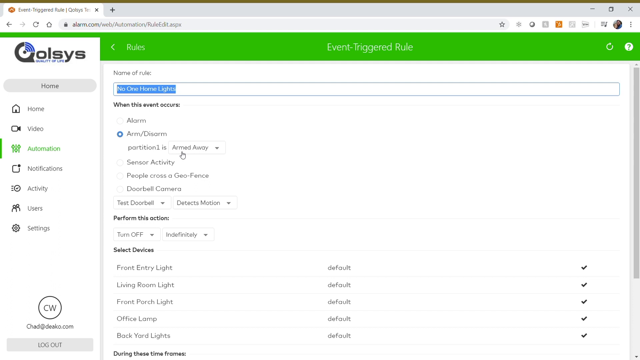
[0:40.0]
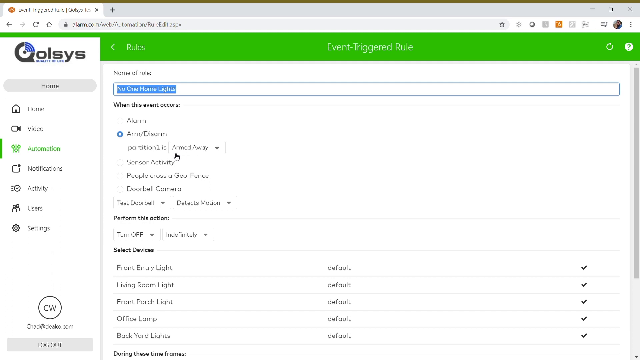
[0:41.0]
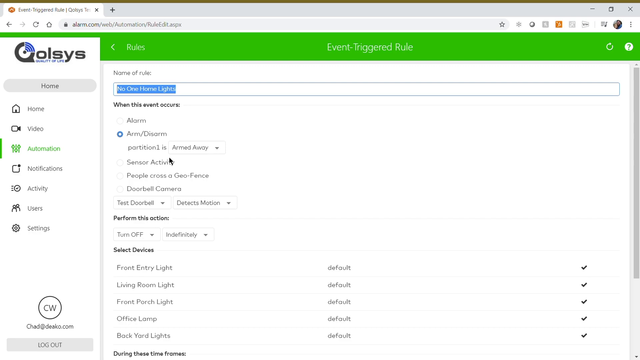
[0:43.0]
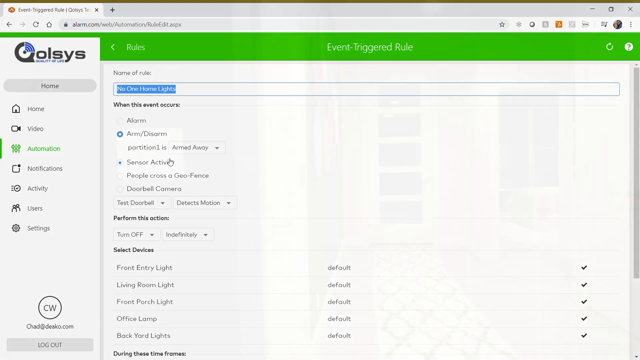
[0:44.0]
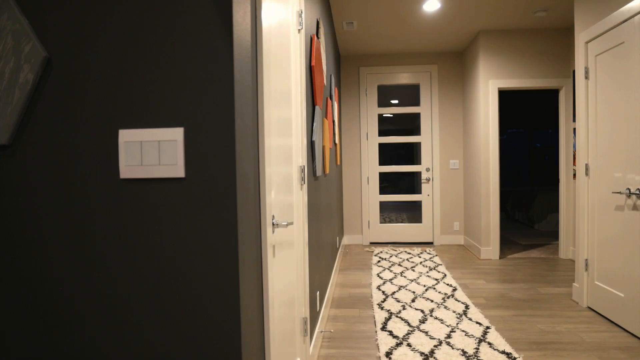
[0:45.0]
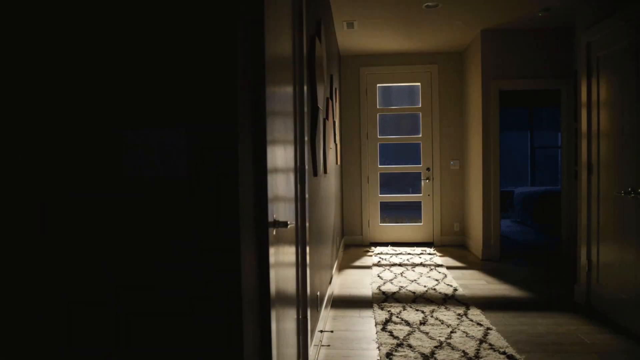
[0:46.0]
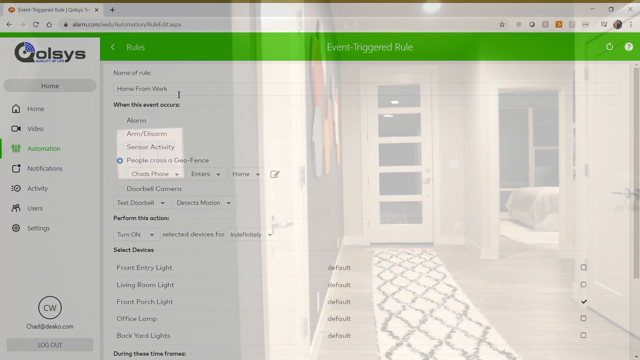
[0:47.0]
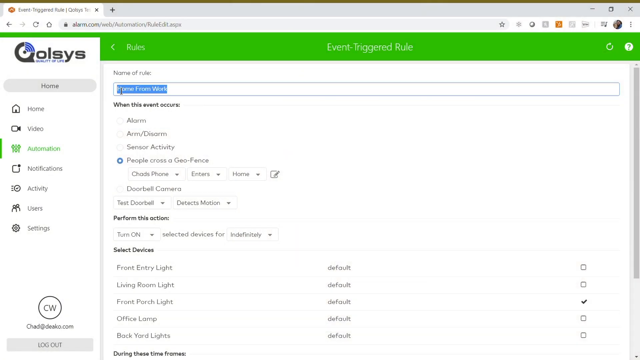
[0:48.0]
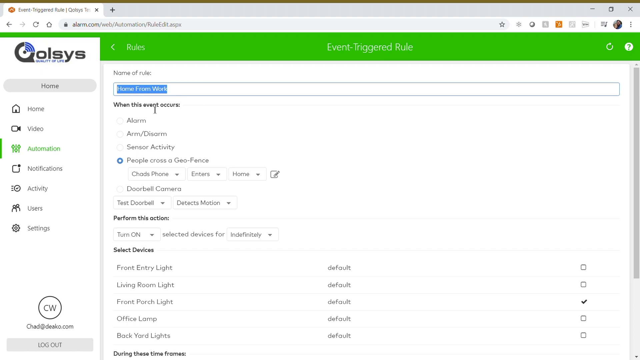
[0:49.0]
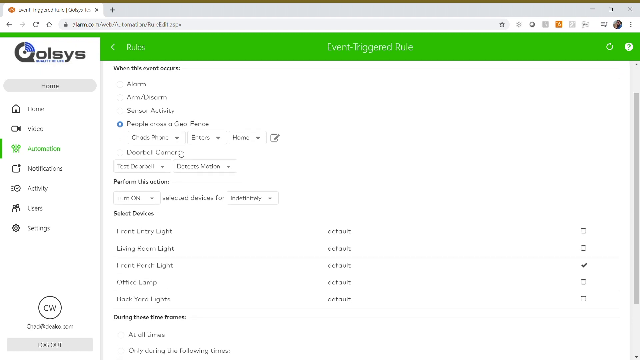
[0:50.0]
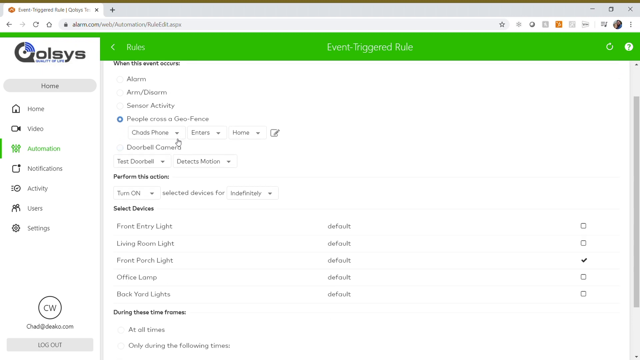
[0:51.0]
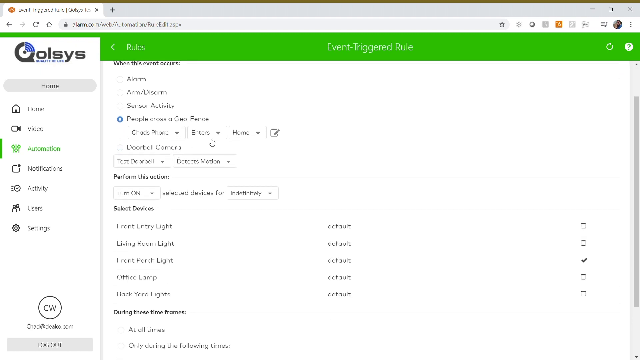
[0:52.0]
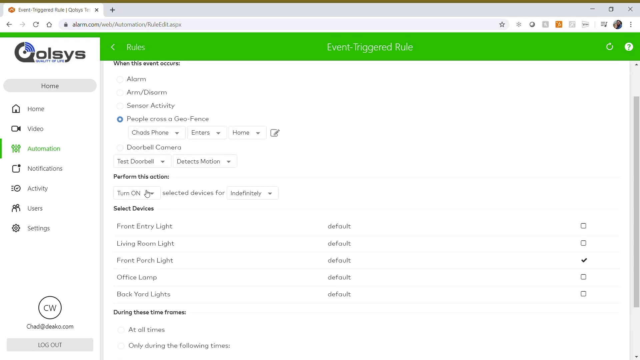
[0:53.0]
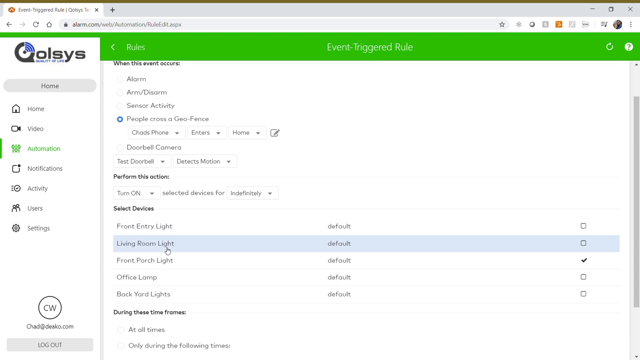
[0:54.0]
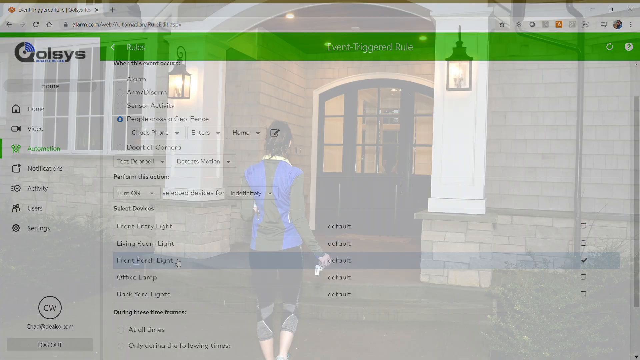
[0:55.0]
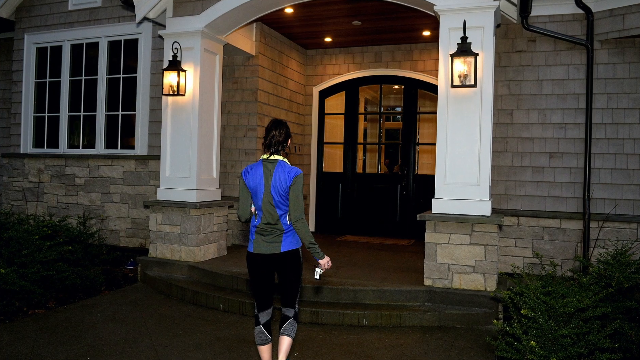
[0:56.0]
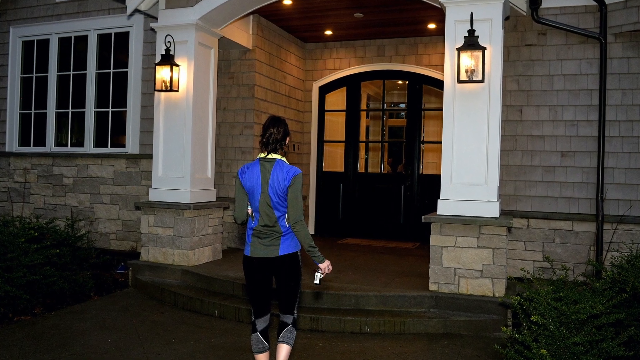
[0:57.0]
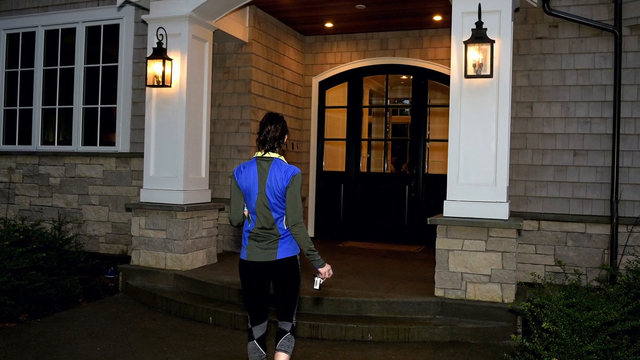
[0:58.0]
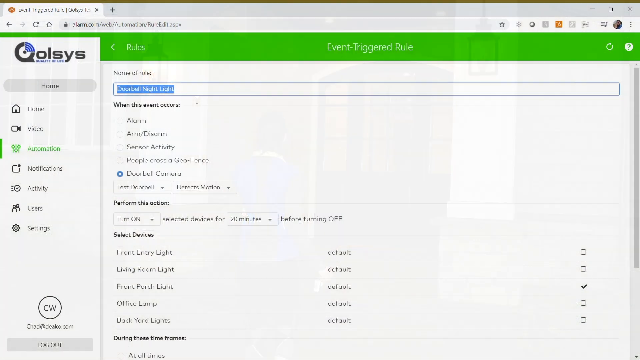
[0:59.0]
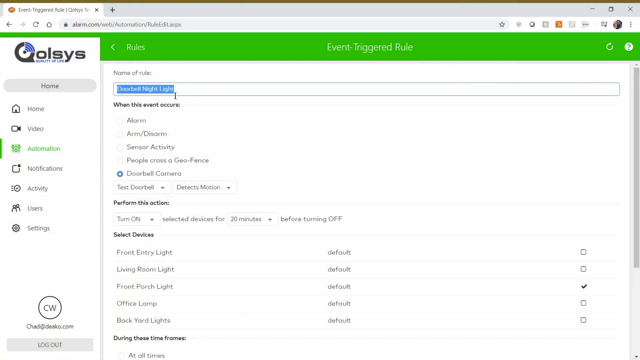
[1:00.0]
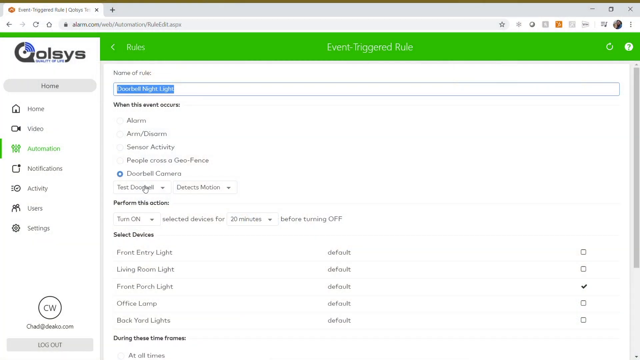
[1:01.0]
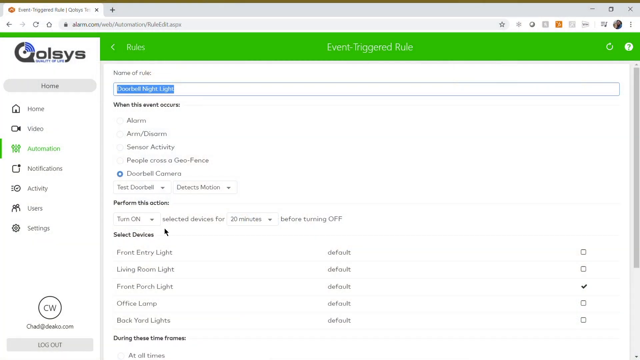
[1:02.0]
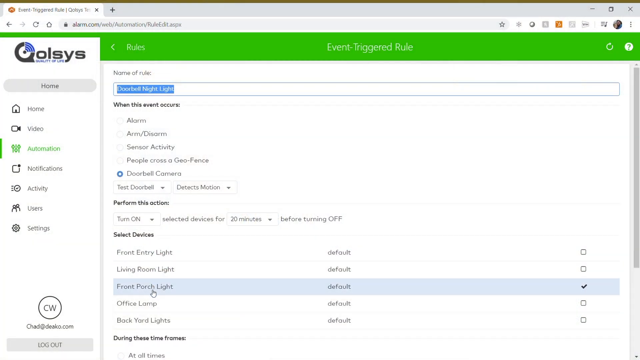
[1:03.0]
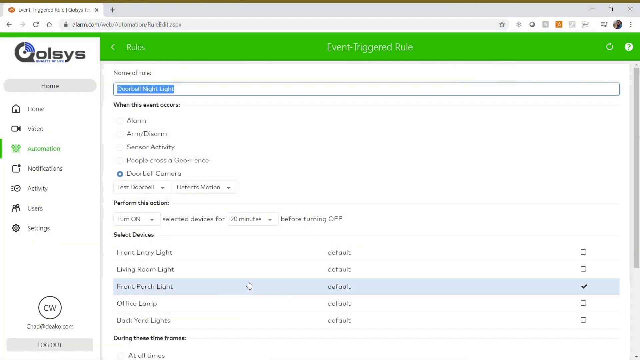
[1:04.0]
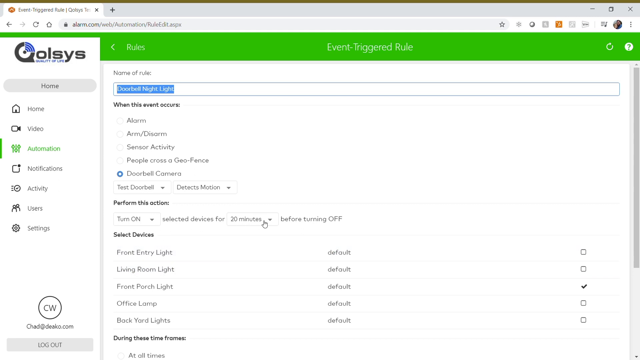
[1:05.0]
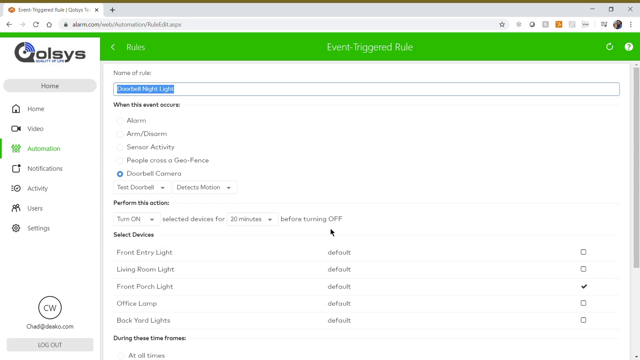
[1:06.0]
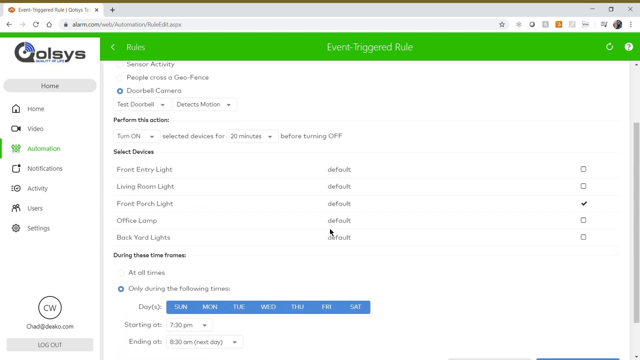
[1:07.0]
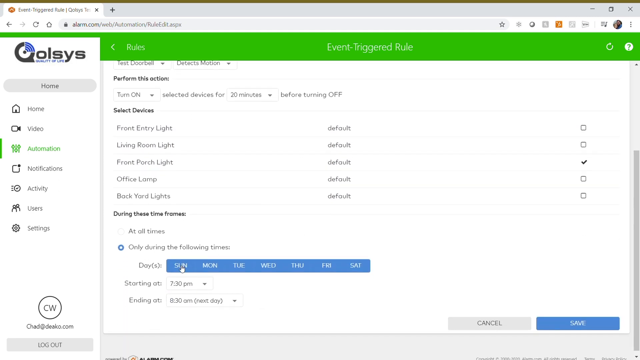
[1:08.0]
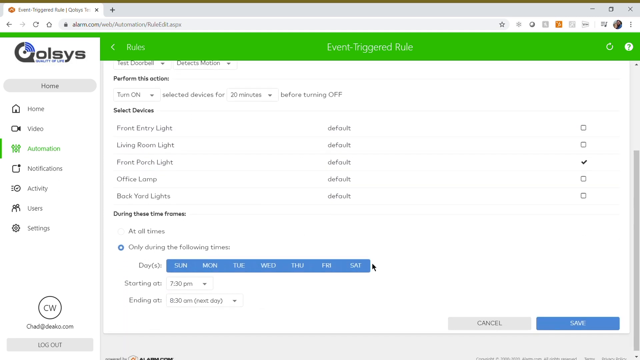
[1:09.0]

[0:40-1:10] The video is slightly wider than it is tall and starts on someone's desktop, apparently in Google Chrome. In the upper left is what is apparently the title of the web page, which looks like a management interface: it says "QOLSYS". Below that is the side navigation bar: home with a house, video with a video camera, automation, which is the current page, notifications with a square, activity with a circle, users with two silhouettes of people, and settings with a gear icon. In the center of the main work area, white text reads "event triggered rule", with a green banner behind it. Below that, on the left, it says "name of rule", and highlighted in blue appears to be "no one home lights". The user has the cursor over "sensor active" below that. The screen then transitions to an inside view of a home, looking down a hallway toward a door in the background, and the lights go from bright to dim and then back to bright. The video then returns to the management interface.